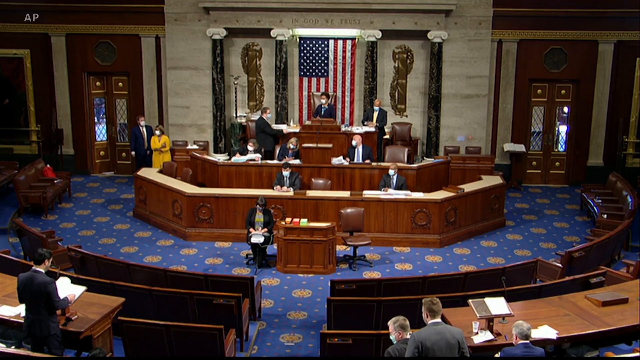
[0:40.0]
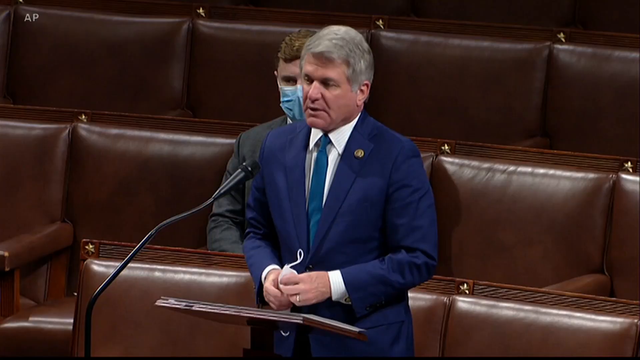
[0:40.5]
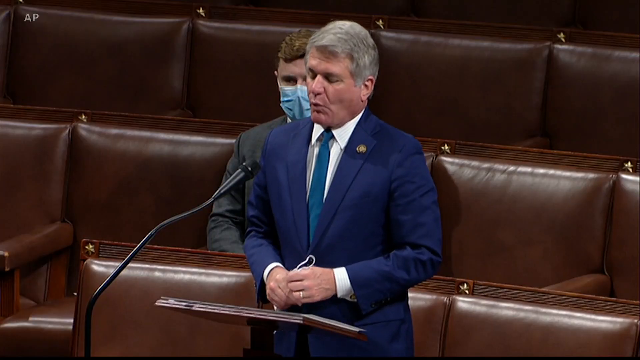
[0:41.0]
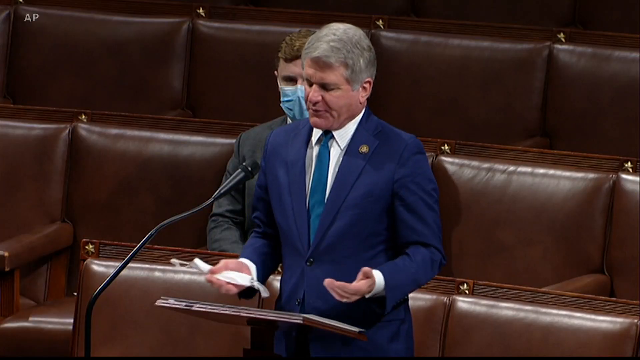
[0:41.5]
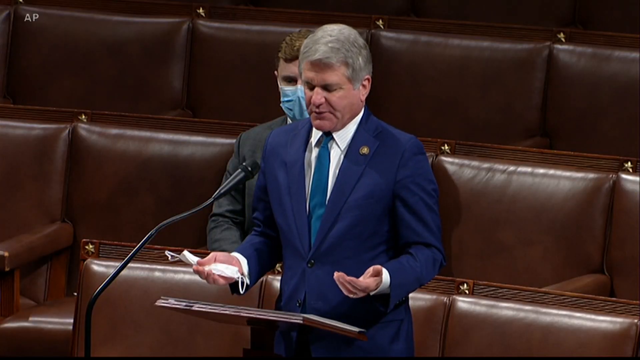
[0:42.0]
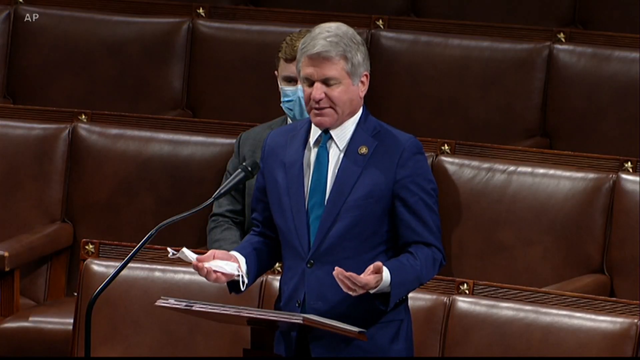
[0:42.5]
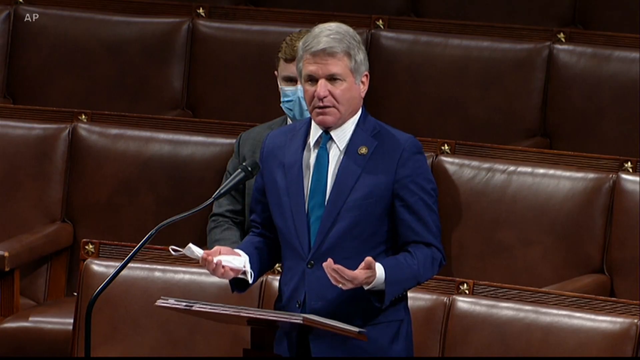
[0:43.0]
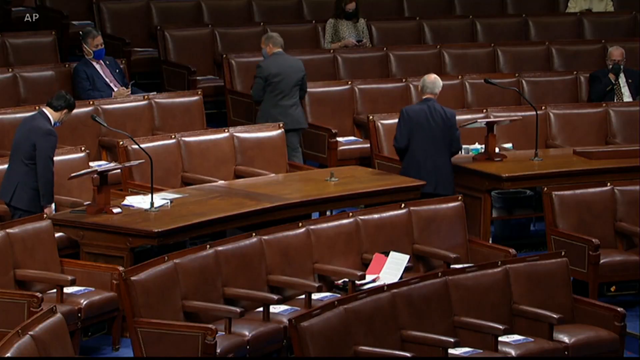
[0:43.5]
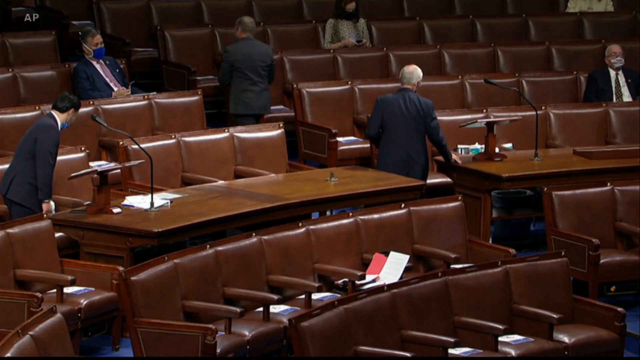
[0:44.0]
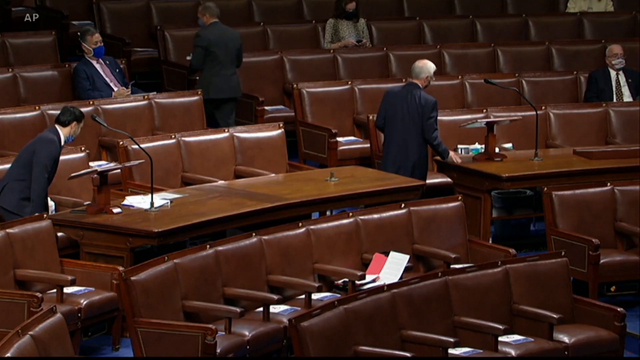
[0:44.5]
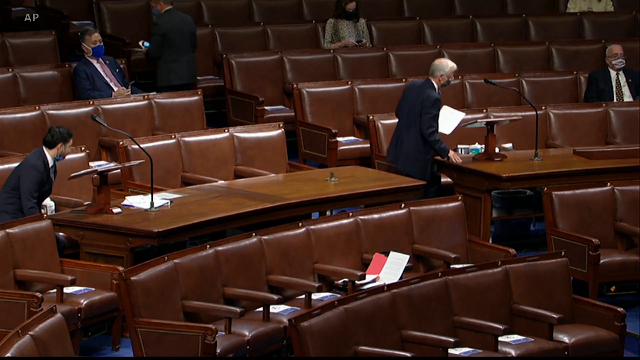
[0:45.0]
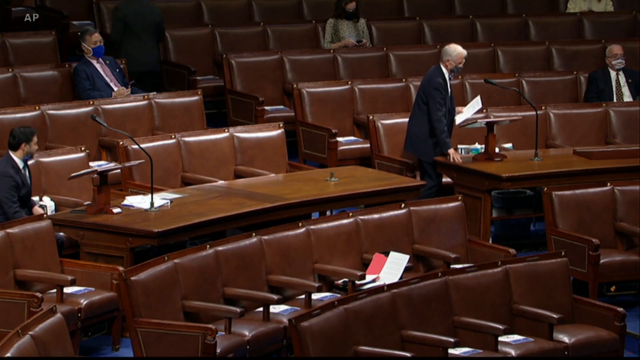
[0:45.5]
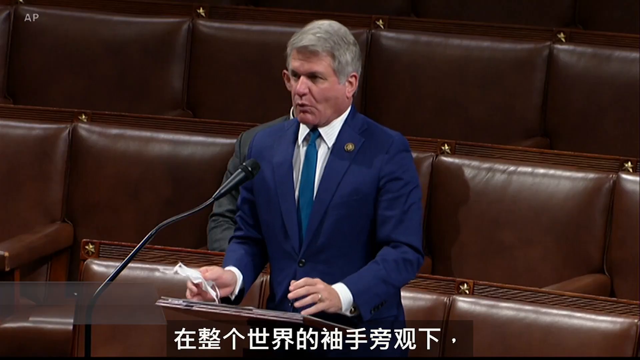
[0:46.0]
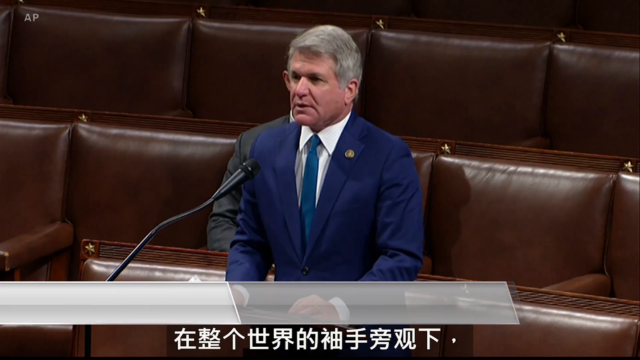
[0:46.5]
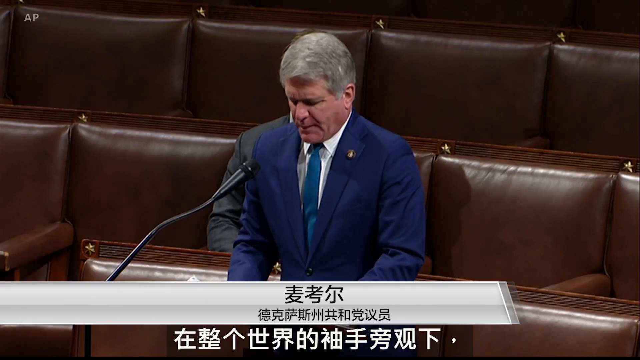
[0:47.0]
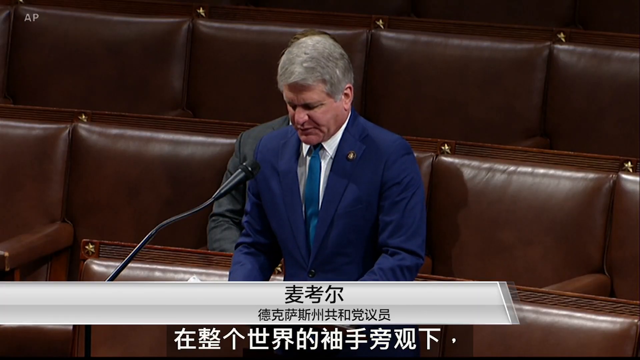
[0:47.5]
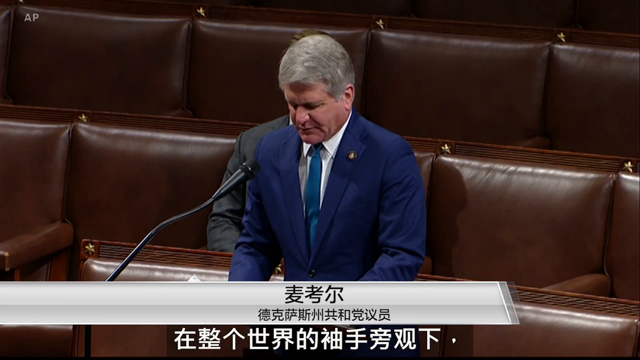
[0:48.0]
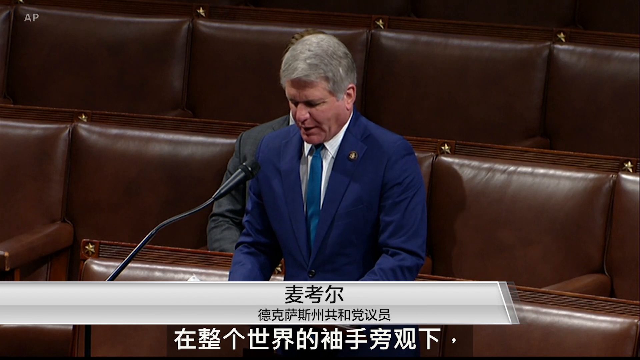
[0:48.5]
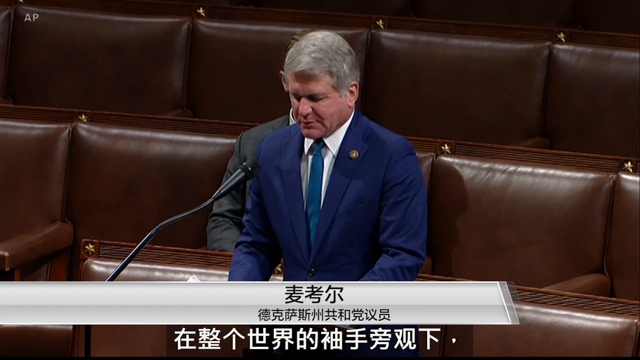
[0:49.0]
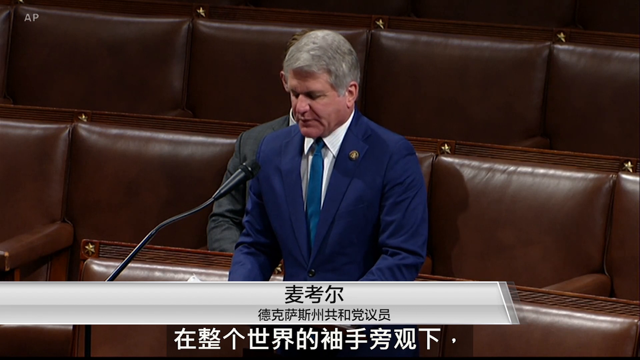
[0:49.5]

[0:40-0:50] A male congressman in a blue suit stands in the audience seats, speaking at the desk with the microphone. He is an older man with grey hair and holds his mask in his hand. As he speaks, the camera turns to show two men, one who seems to be going back to his seat and the other who may be leaving the room. A caption pops up underneath the congressman in the blue suit, all in Chinese.